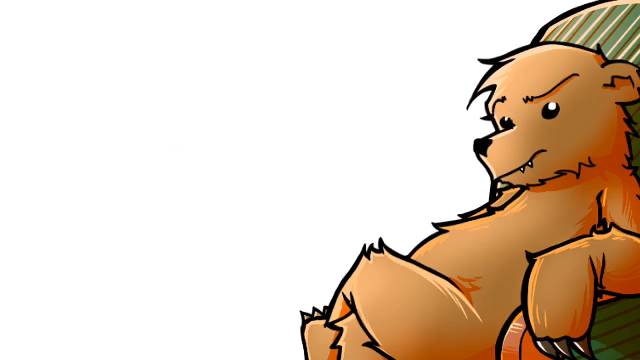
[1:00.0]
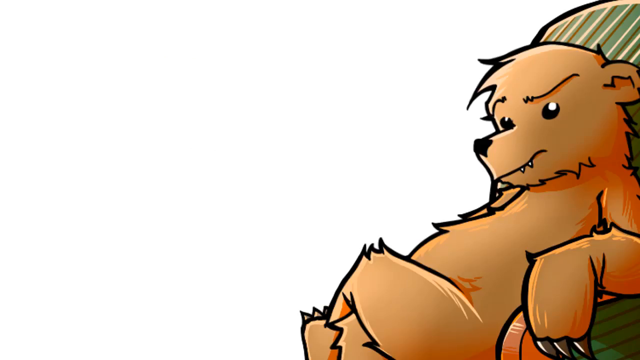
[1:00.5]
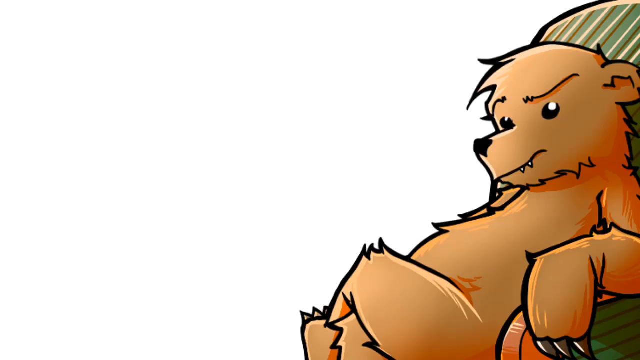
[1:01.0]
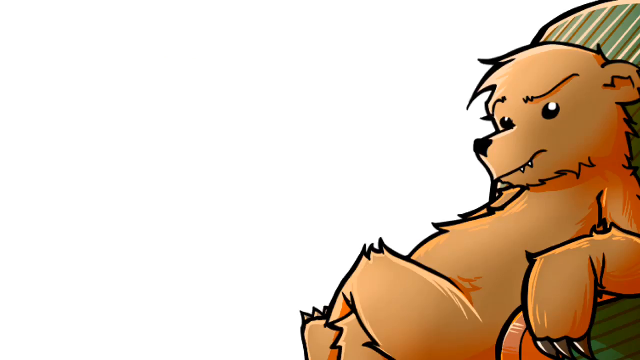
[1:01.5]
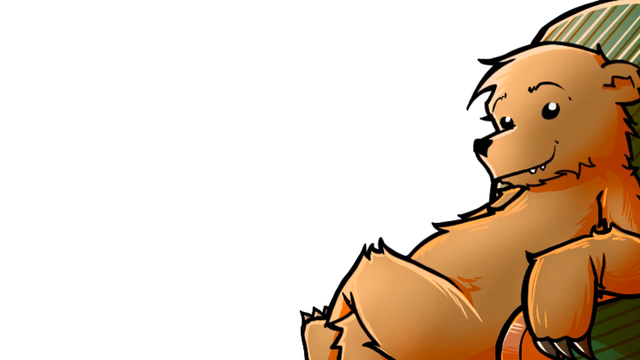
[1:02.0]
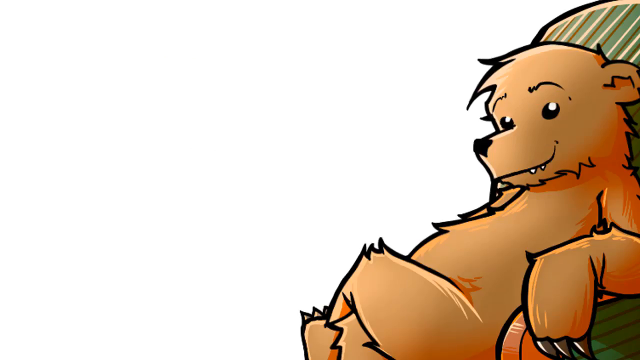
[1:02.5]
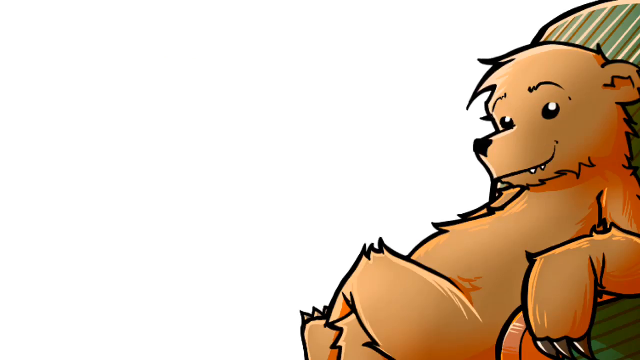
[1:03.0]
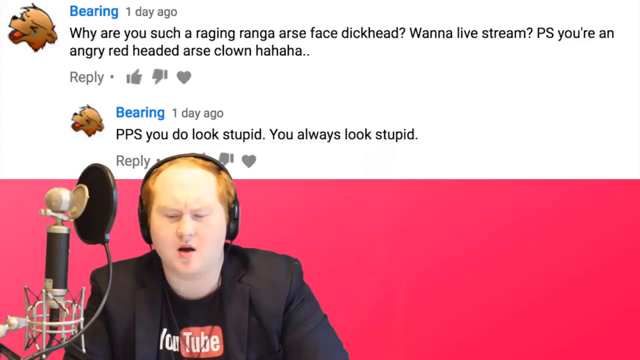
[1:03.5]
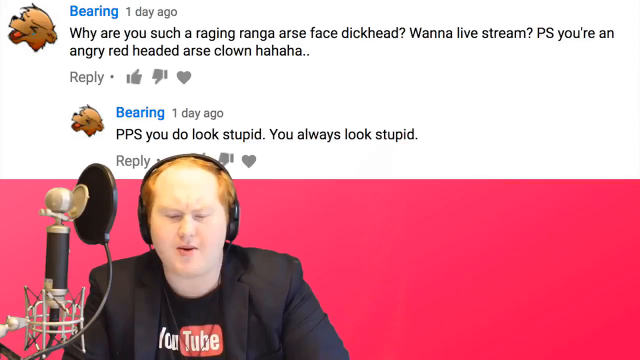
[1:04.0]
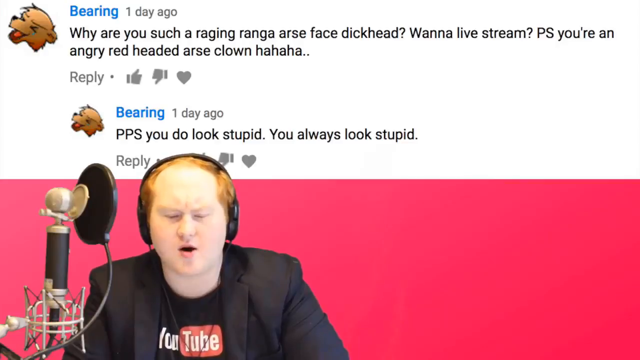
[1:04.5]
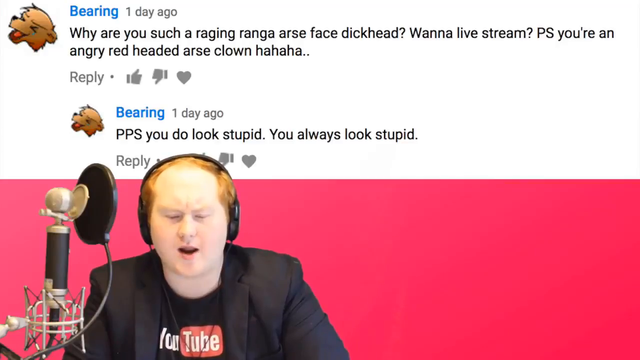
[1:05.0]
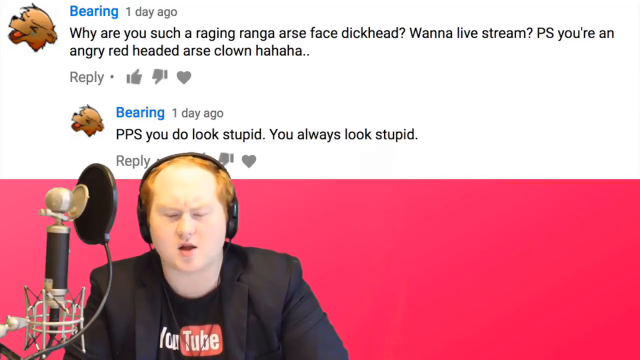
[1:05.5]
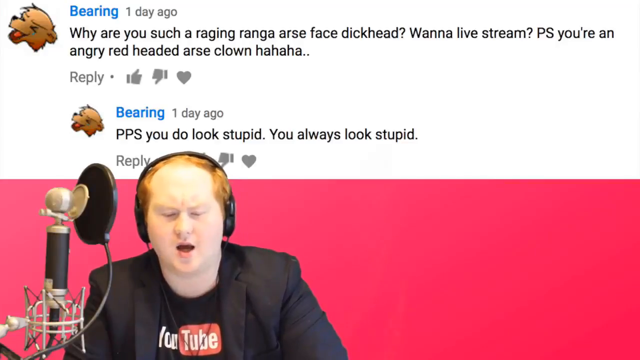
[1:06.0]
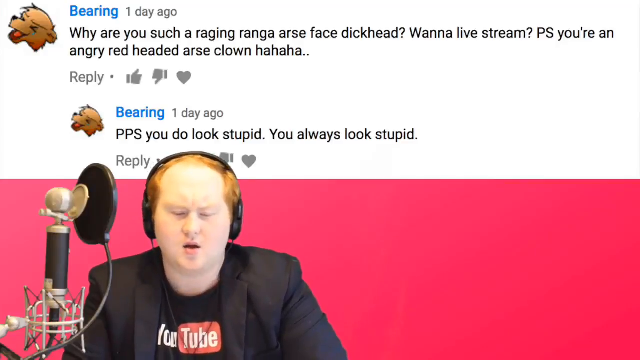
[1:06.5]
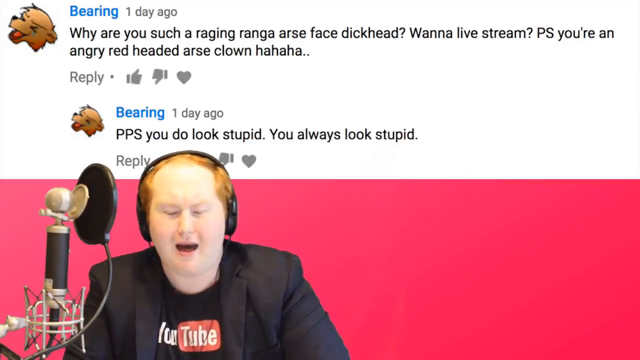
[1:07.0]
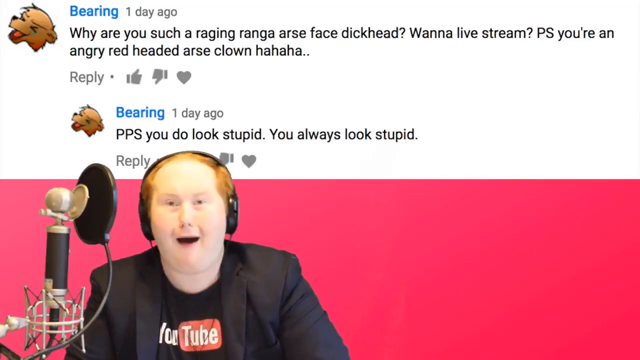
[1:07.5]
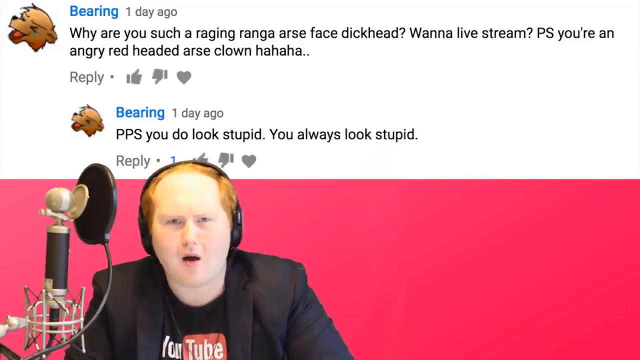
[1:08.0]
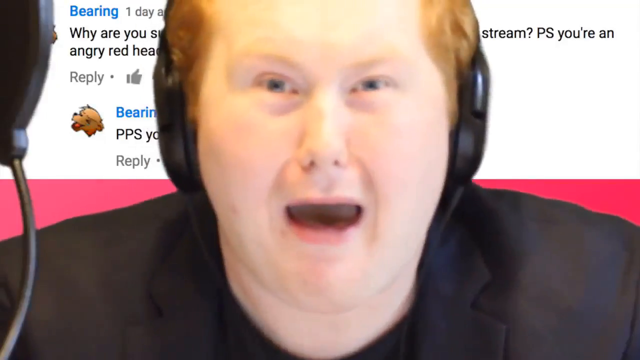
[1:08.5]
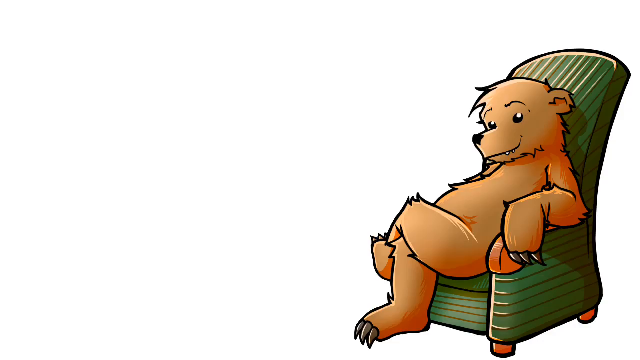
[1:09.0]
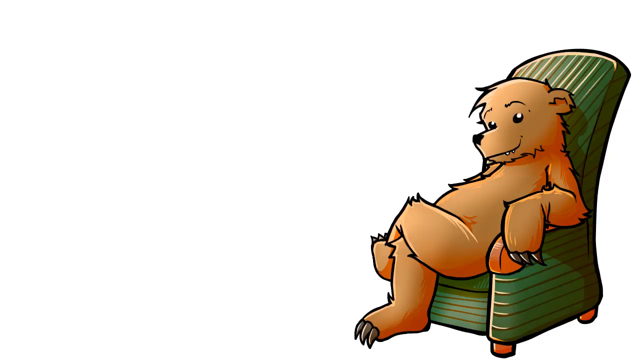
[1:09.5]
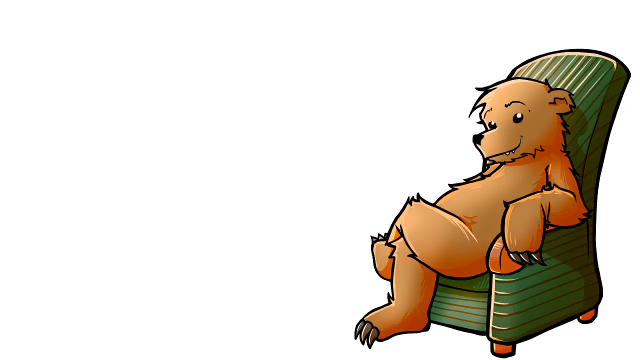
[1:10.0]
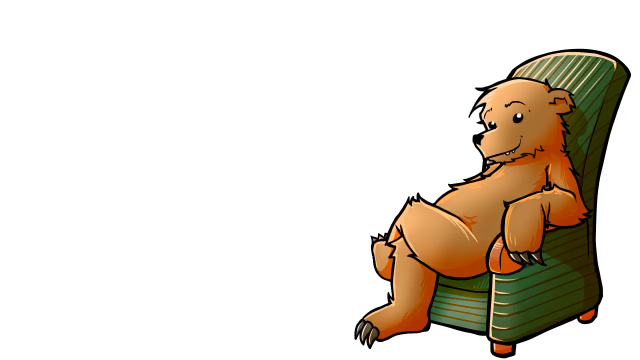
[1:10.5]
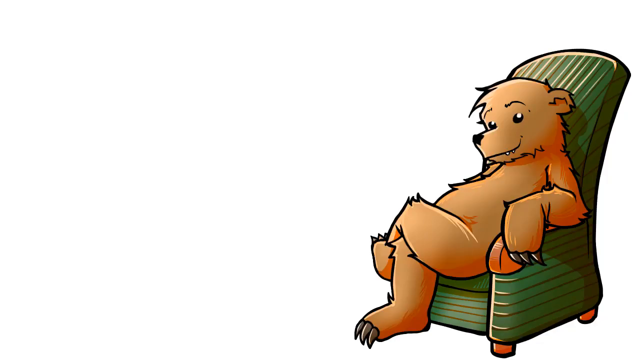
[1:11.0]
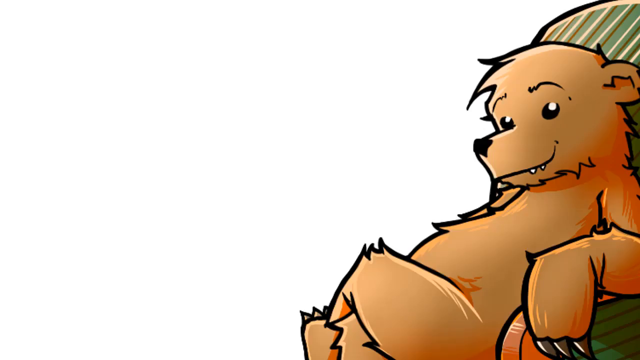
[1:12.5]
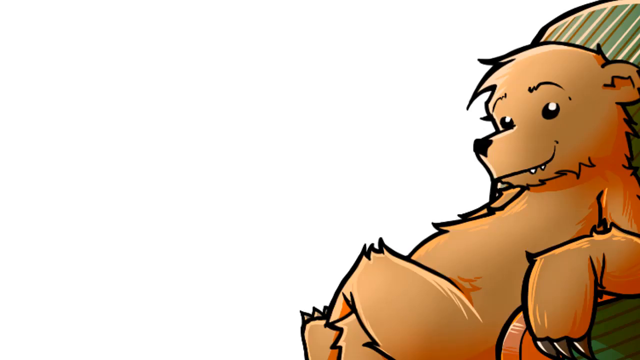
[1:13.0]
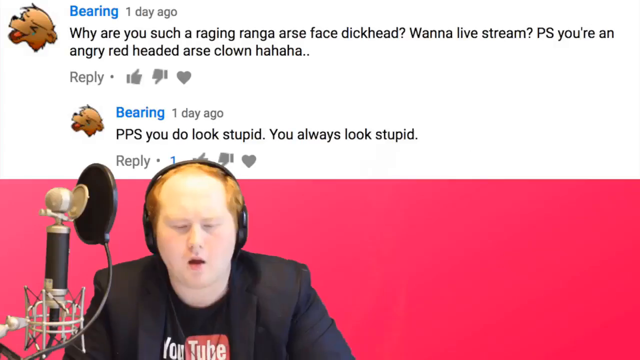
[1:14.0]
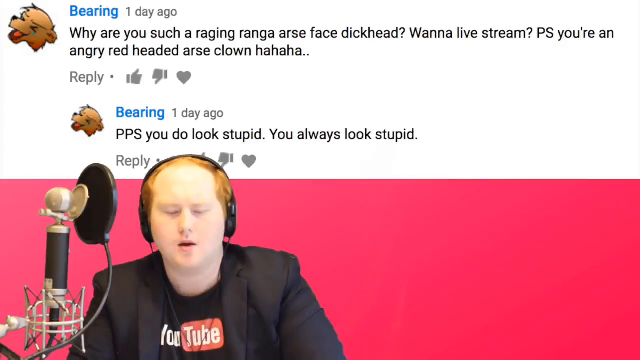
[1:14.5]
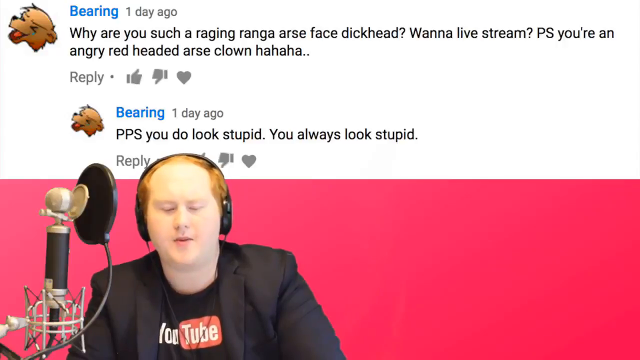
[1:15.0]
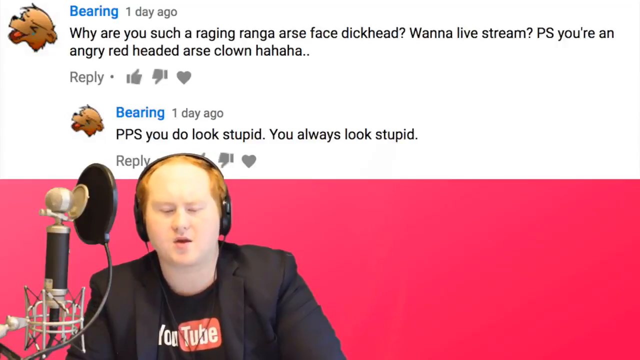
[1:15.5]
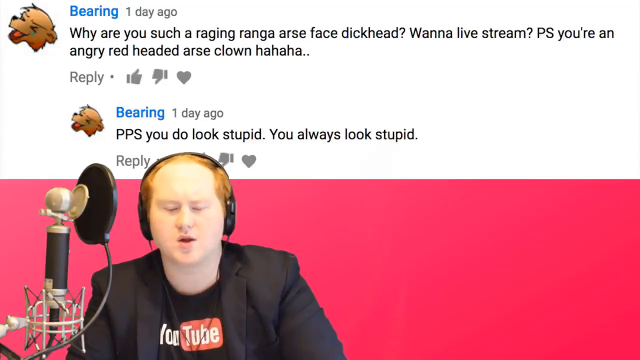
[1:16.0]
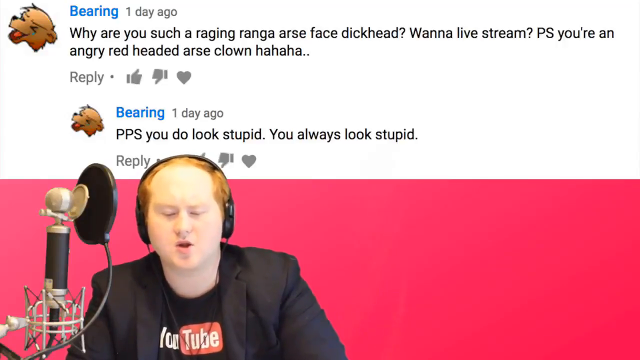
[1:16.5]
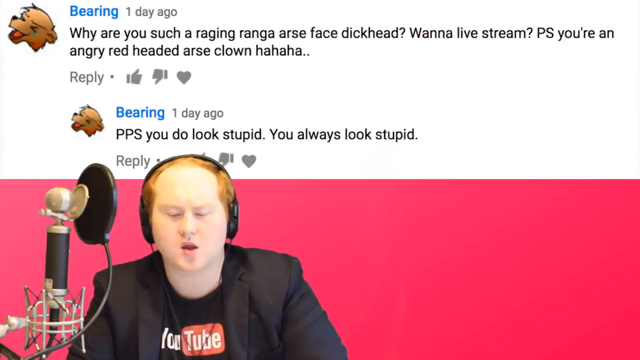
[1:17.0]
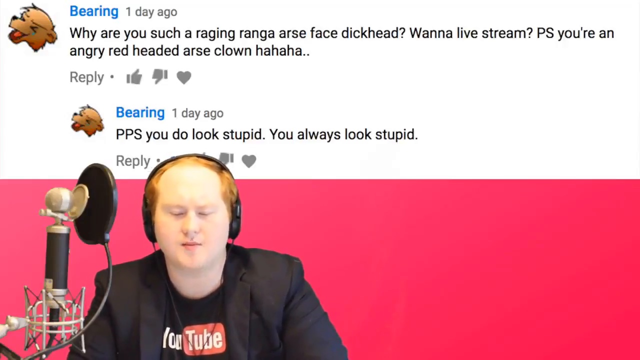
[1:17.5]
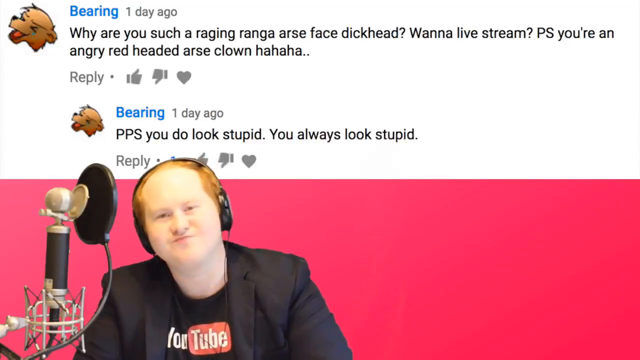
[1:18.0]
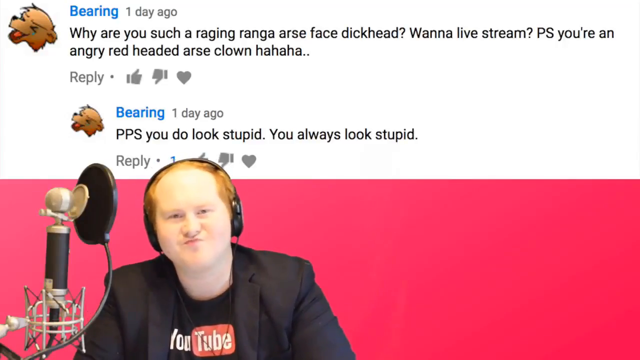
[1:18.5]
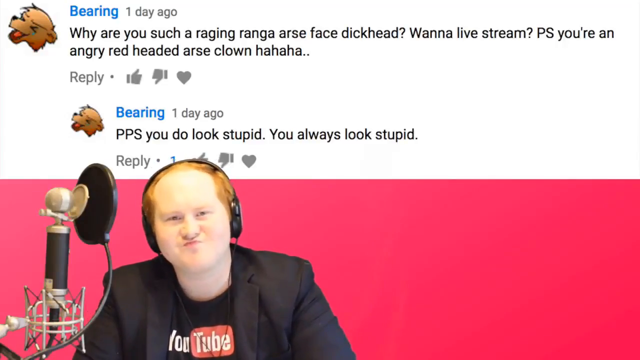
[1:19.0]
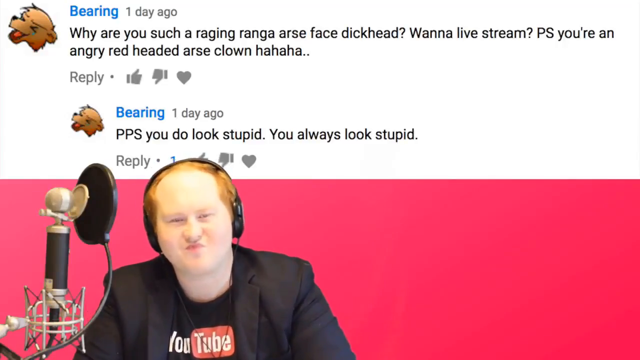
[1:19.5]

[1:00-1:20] The cartoon bear sits in the recliner with a raised eyebrow and a concerned look, then quickly switches back to smiling. The video cuts to the podcaster, who appears to have regained some composure; his expressions are a little more controlled, though he still has a furrowed brow as he speaks. He appears to be looking down at a screen in front of him that is out of view. The same critical text from the commenter "Bearing" is still posted on the screen behind him. At one point he shakes his head mockingly, with a sarcastic, laughing expression, looking directly into the camera, and the camera briefly does a quick close-up of his mocking face. The video returns to the bear in the recliner, smiling again and no longer angry or frustrated, then back to the podcaster, who continues speaking with concentration. At one point he looks up directly into the camera, lips pursed, with kind of a smug smile.